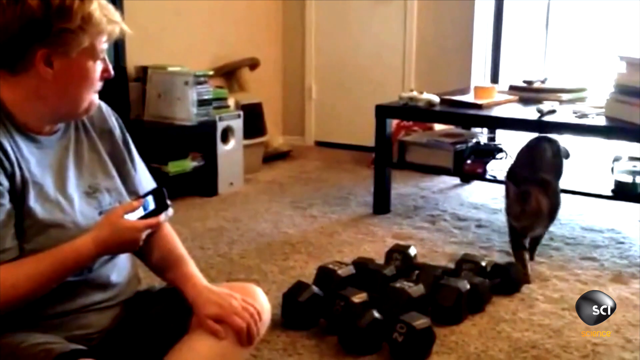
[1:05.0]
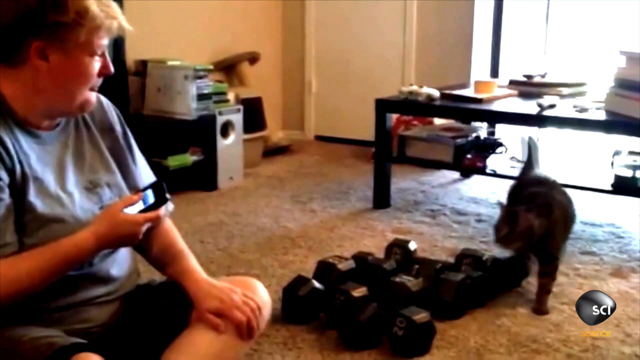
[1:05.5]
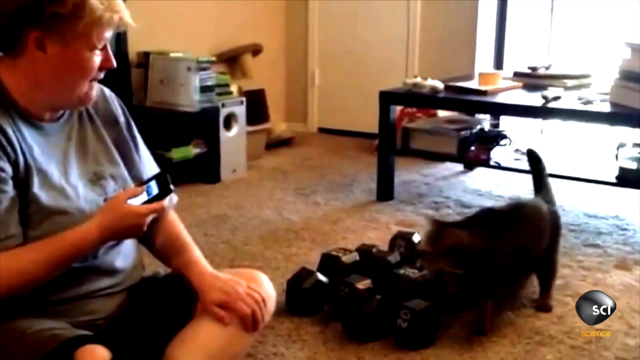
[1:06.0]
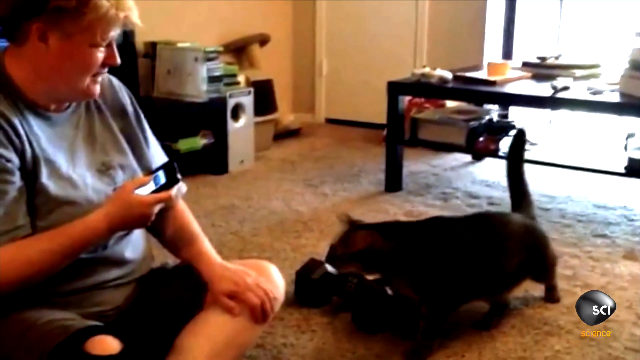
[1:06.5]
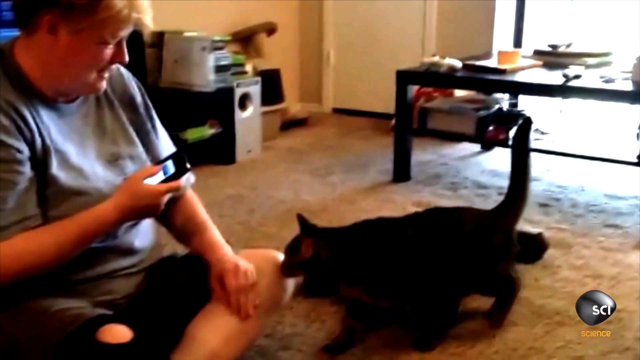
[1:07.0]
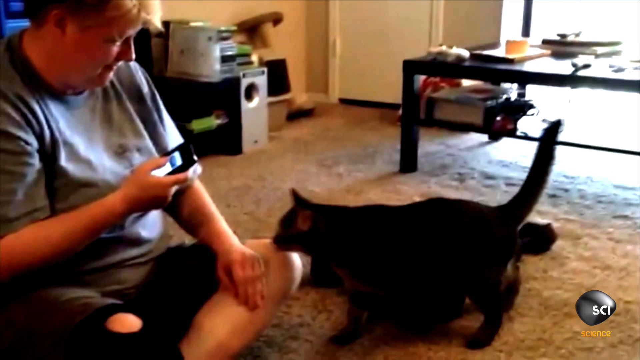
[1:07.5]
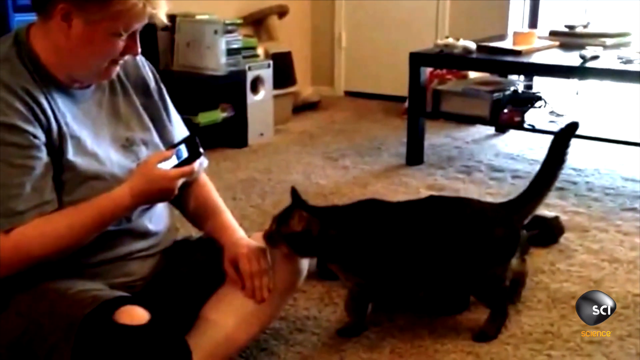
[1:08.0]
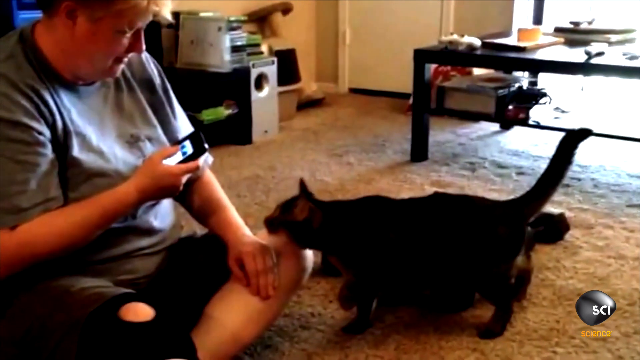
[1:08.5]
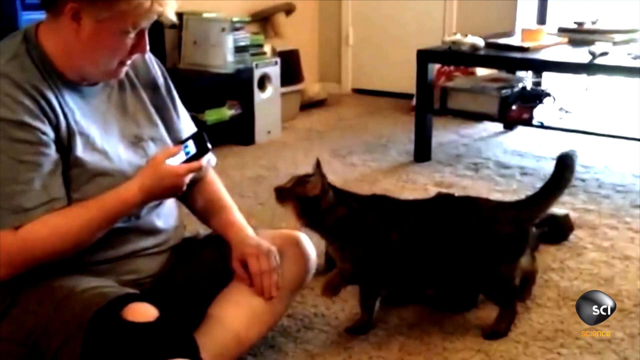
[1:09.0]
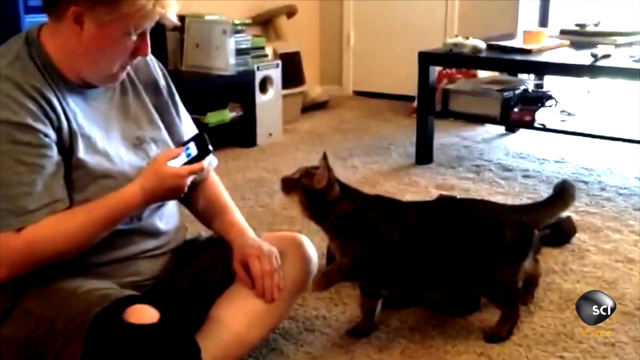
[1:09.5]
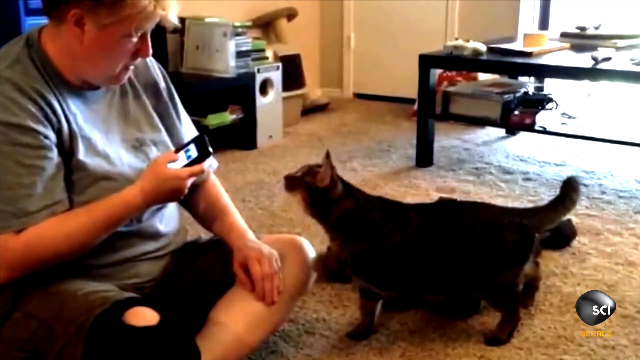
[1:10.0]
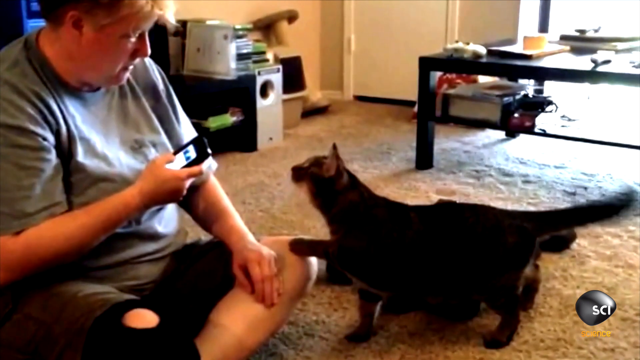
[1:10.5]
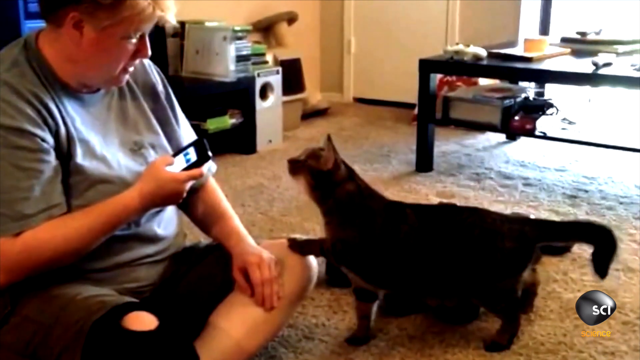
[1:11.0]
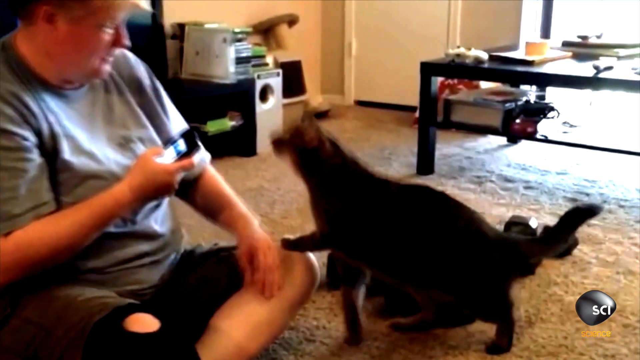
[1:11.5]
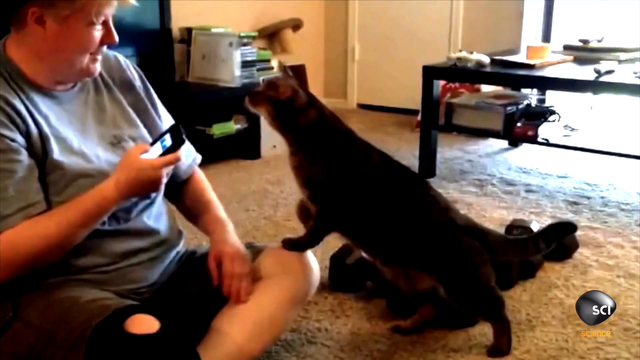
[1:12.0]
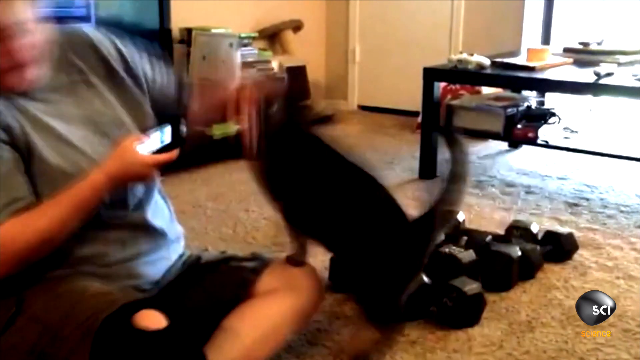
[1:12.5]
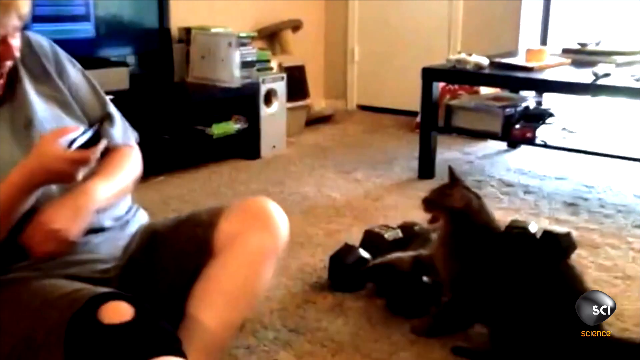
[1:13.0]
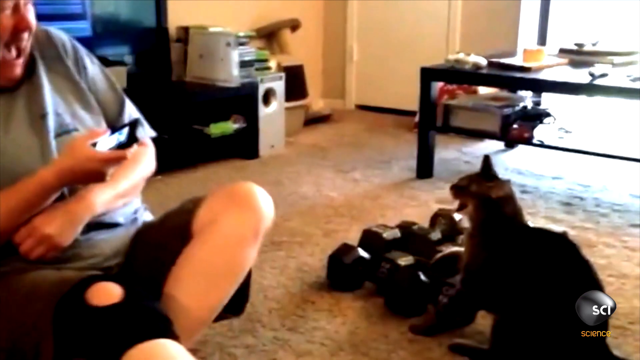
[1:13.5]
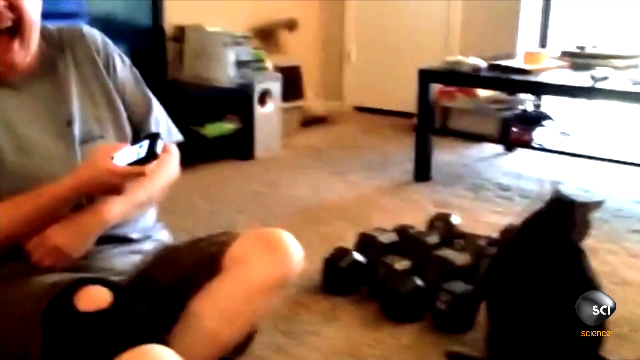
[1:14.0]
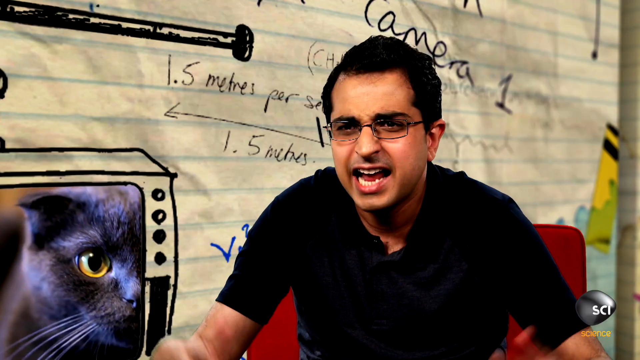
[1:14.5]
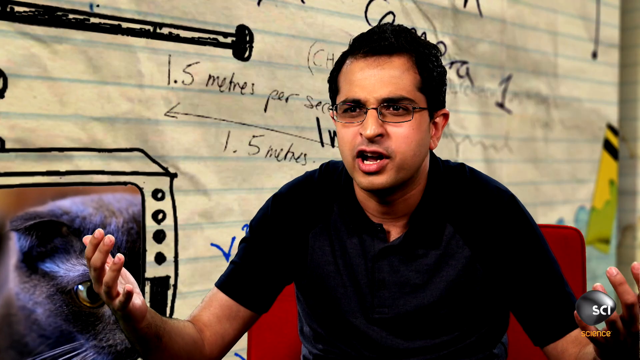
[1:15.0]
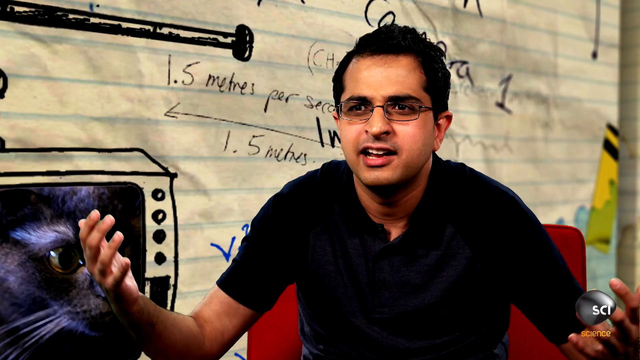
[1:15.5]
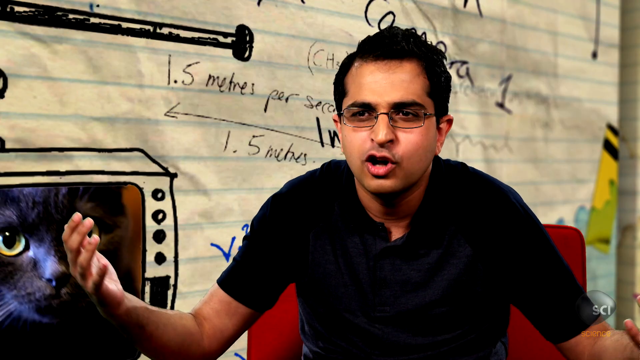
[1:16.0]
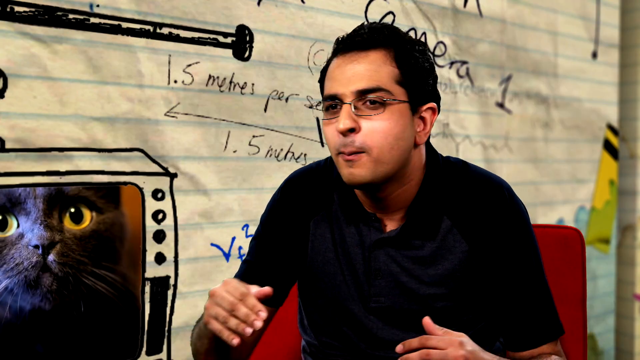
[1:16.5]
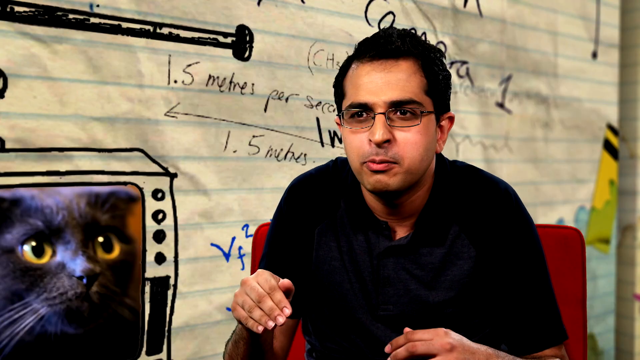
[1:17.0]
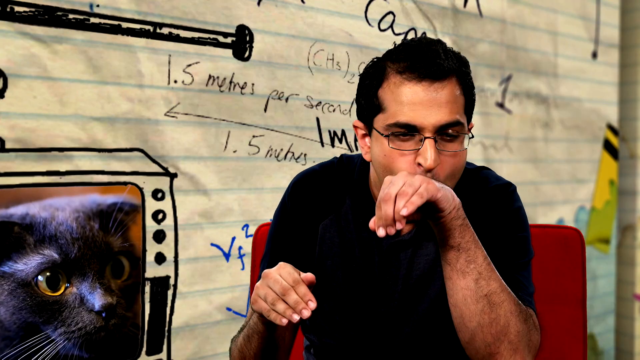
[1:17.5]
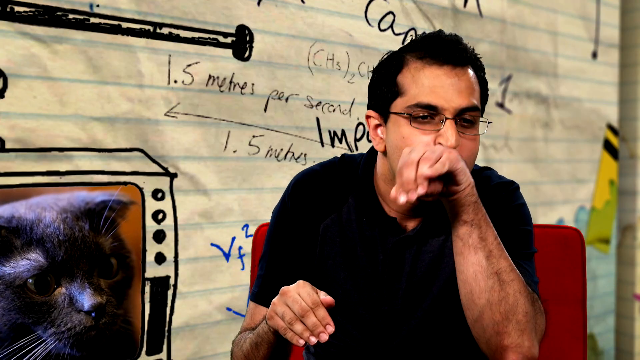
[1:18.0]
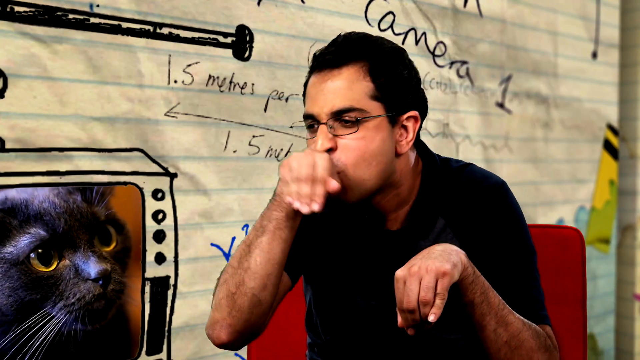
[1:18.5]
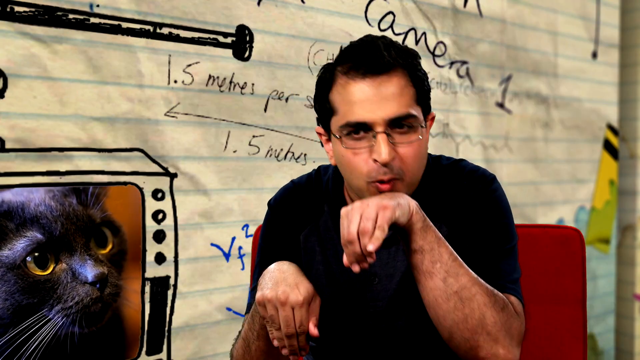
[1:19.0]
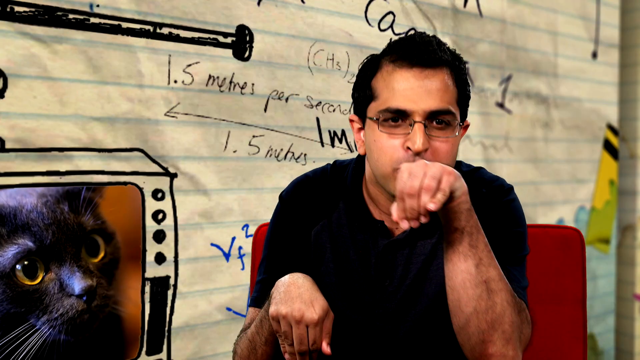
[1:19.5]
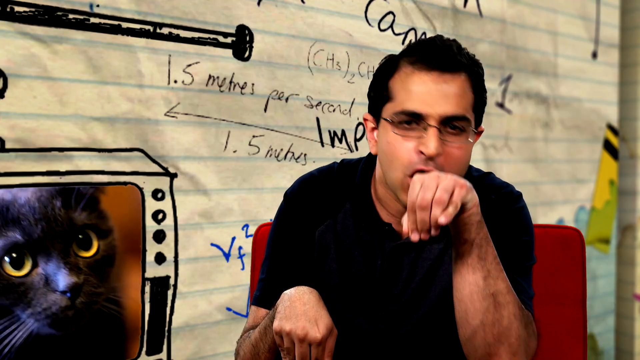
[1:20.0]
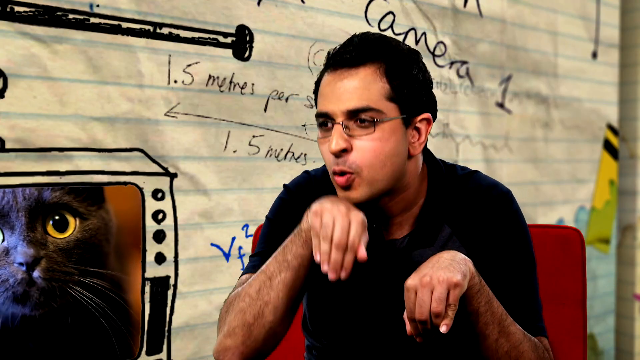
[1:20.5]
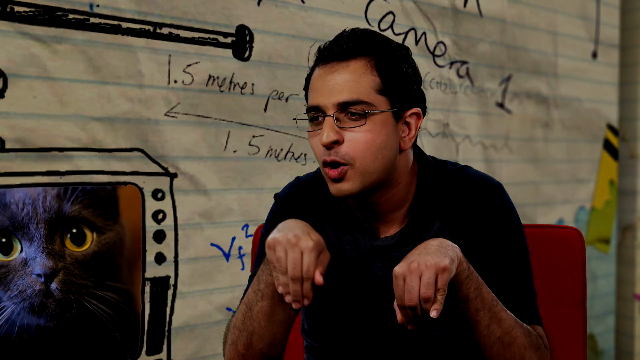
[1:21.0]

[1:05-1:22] The footage of the cat plays again: it approaches its owner, sniffs her hand, starts to climb up on her and attacks her. Once she pushes it away with her arm, the cat hisses and retreats. The video cuts to another expert with short black hair, glasses and dark brown eyes, wearing a black shirt. He is very animated and comical, appearing to mime a cat bathing itself, repeatedly seeming to imitate licking his paws. He also looks sort of almost angry or frustrated with the video. Behind him plays a small clip of a grey cat with large yellow eyes, which appears cute and almost seems to watch him as he mimes licking his paws. The cat also appears to maybe be a Scottish Fold, as it has floppy ears.